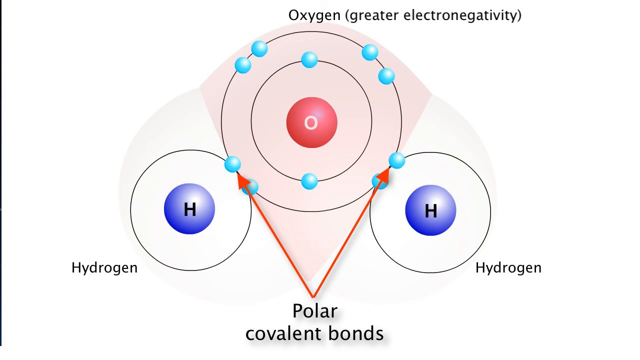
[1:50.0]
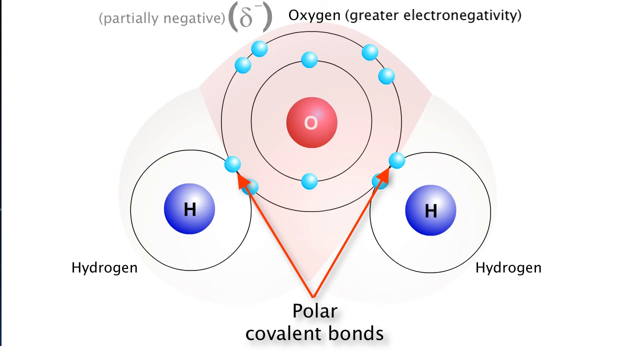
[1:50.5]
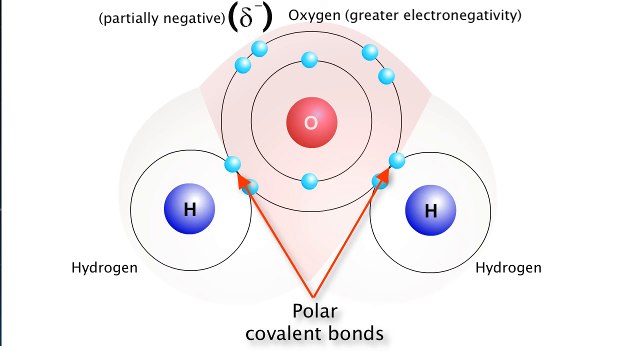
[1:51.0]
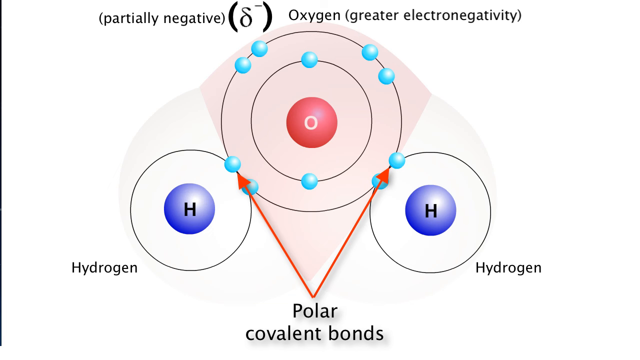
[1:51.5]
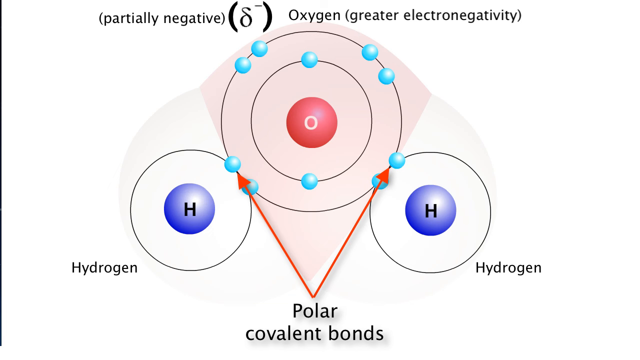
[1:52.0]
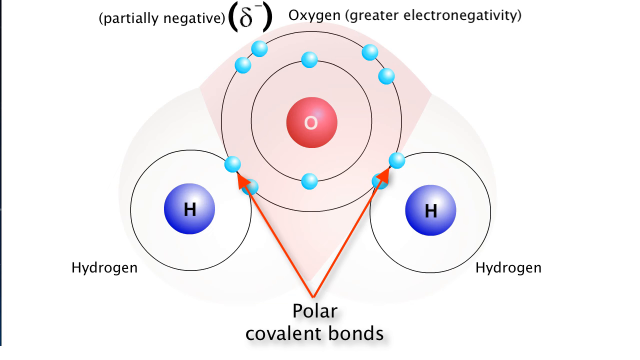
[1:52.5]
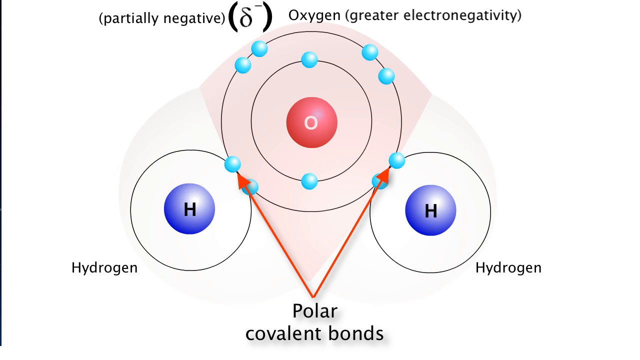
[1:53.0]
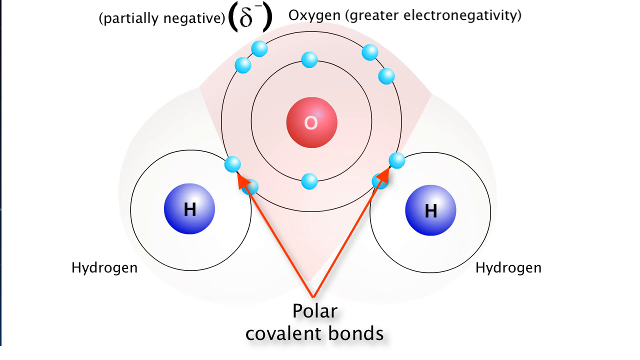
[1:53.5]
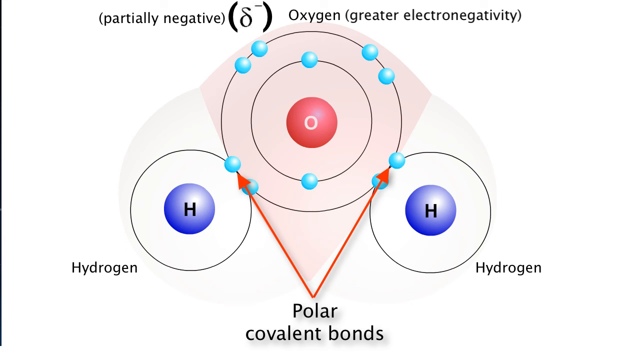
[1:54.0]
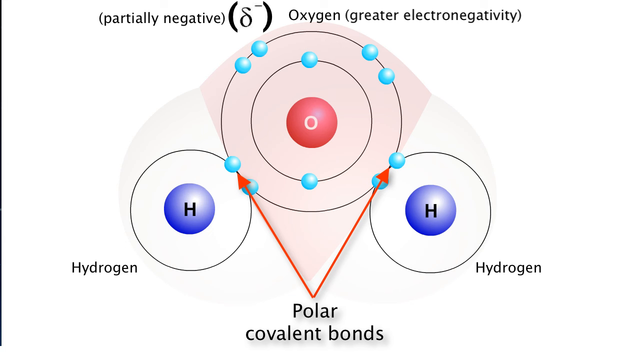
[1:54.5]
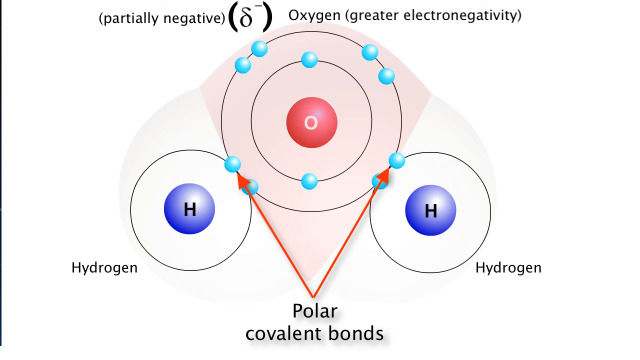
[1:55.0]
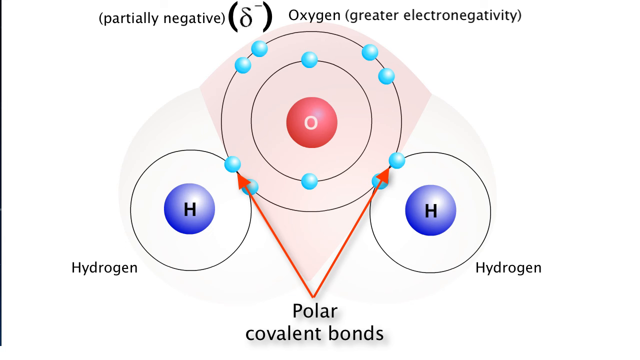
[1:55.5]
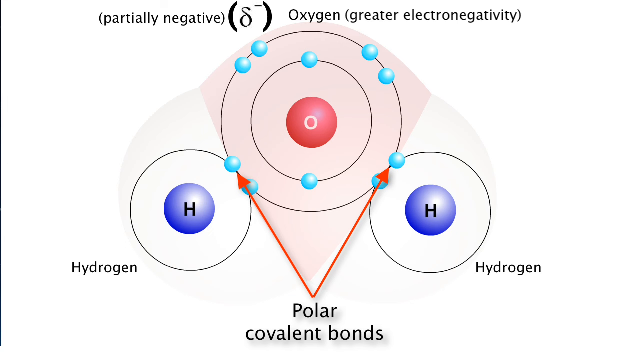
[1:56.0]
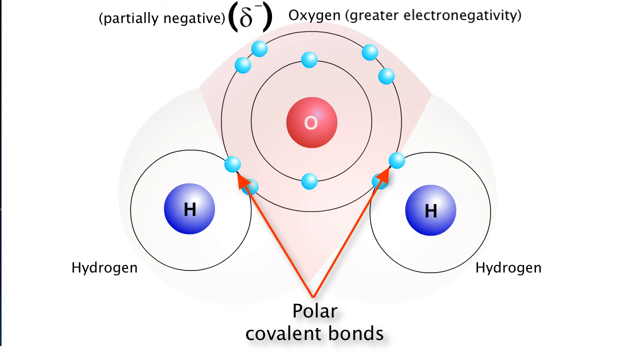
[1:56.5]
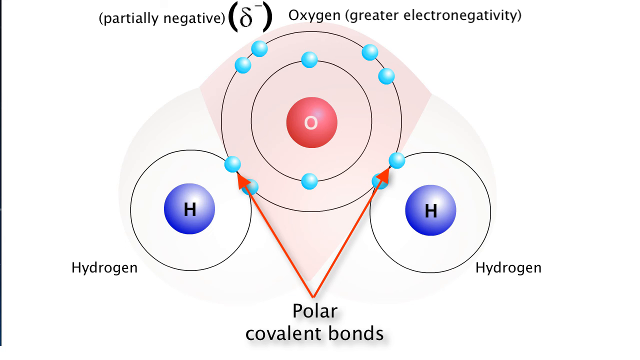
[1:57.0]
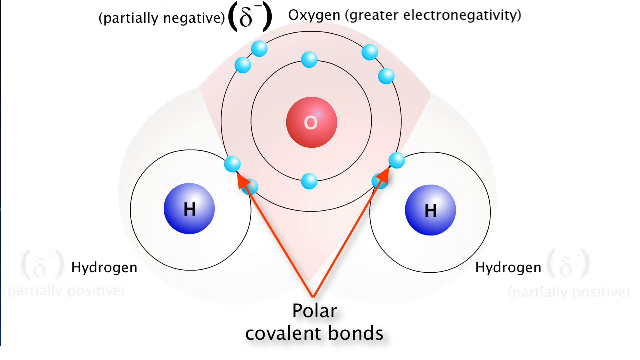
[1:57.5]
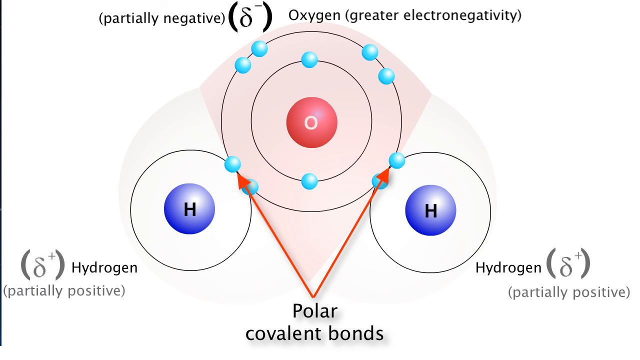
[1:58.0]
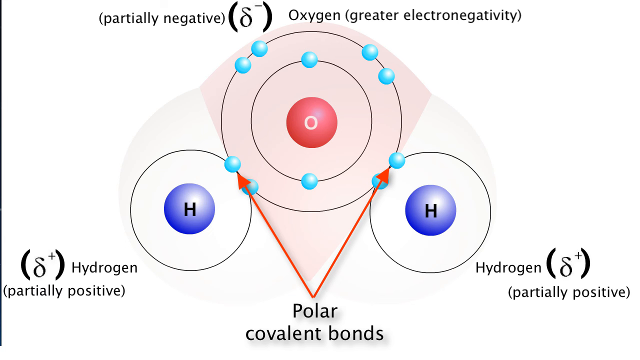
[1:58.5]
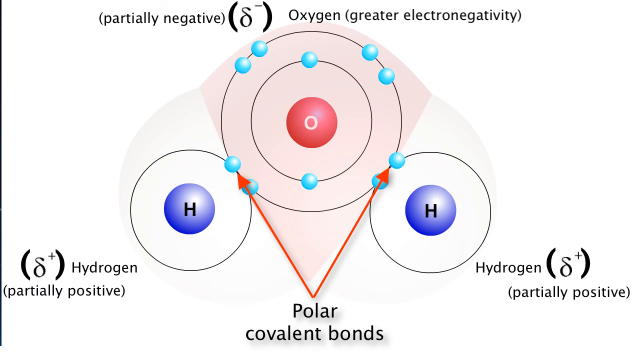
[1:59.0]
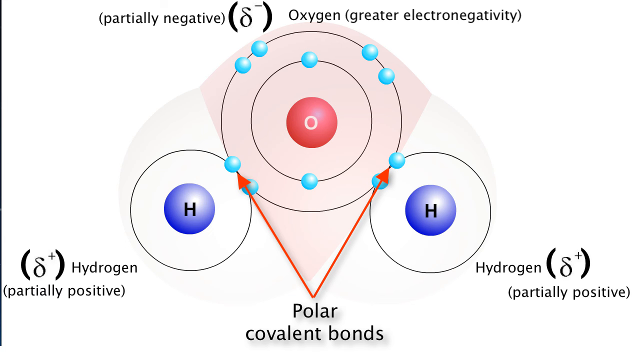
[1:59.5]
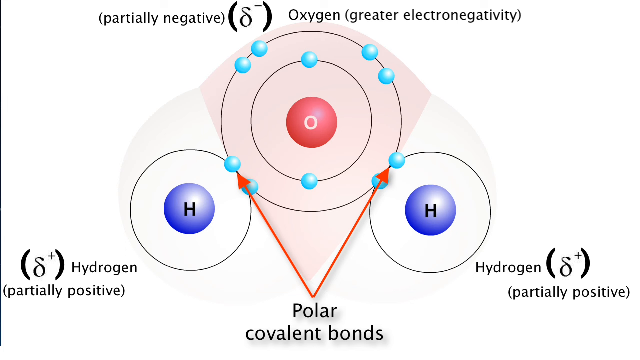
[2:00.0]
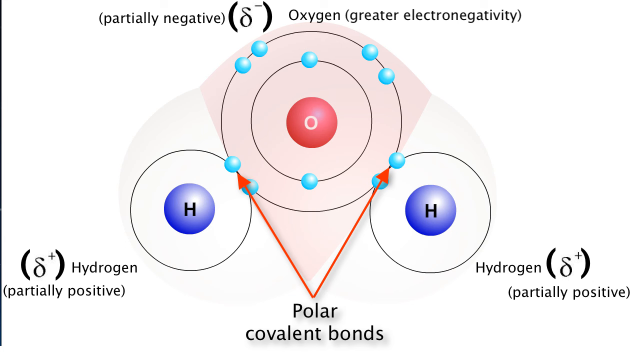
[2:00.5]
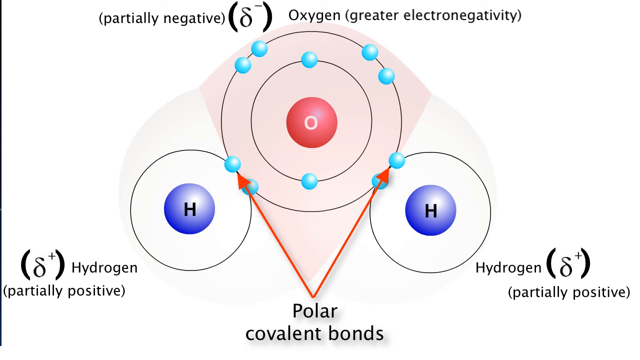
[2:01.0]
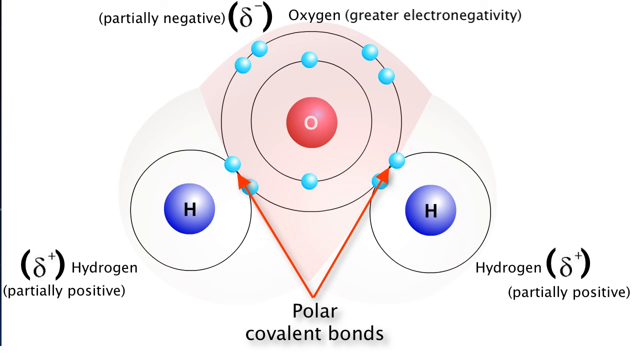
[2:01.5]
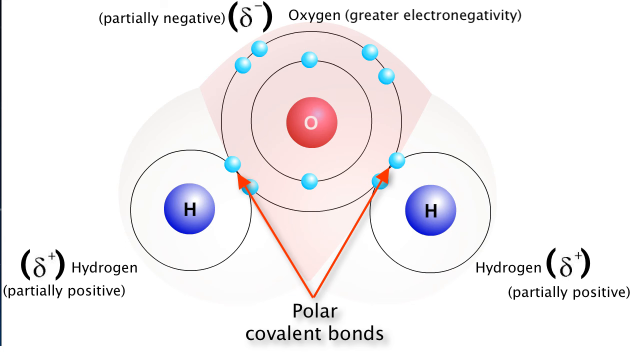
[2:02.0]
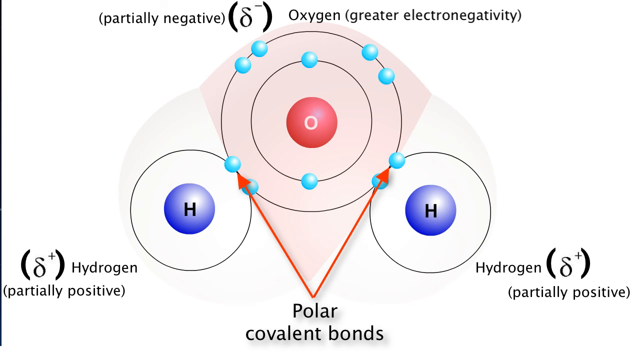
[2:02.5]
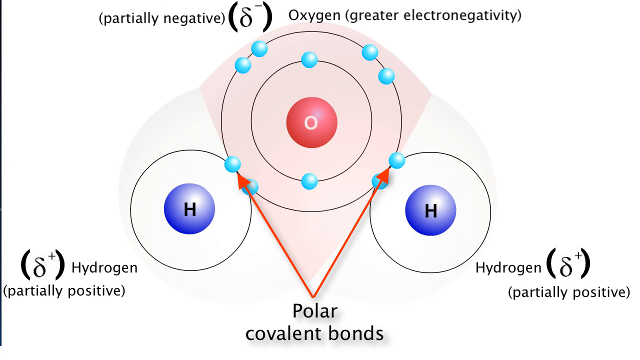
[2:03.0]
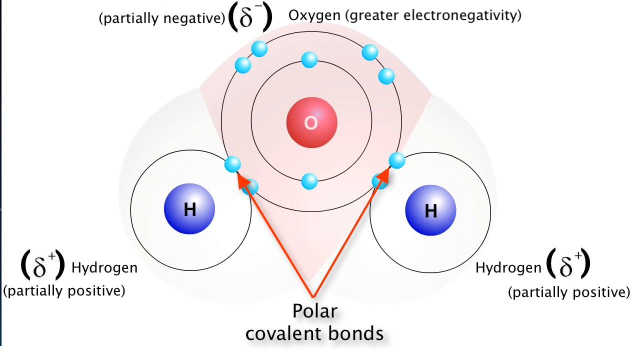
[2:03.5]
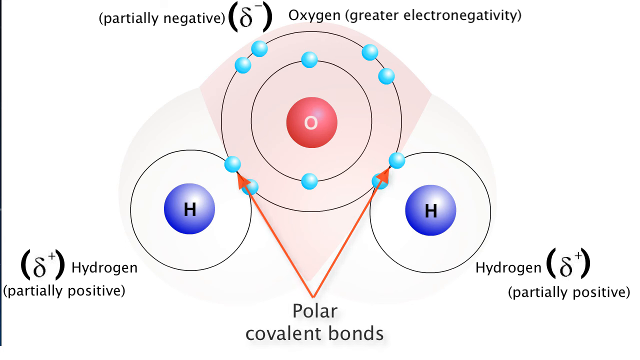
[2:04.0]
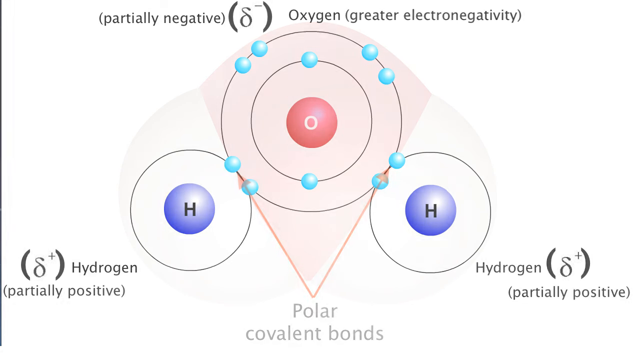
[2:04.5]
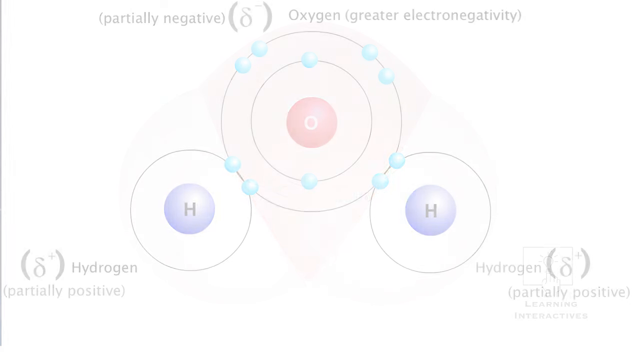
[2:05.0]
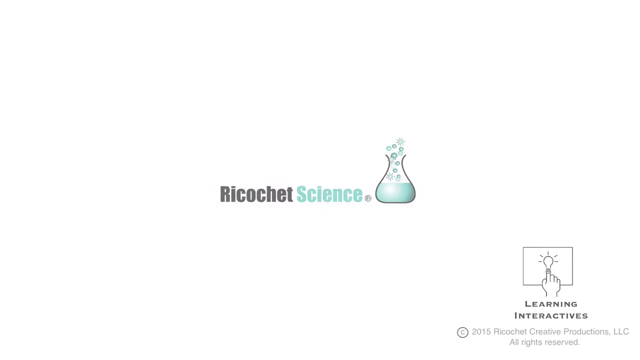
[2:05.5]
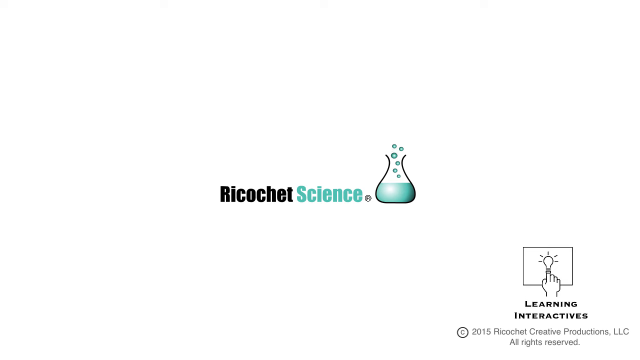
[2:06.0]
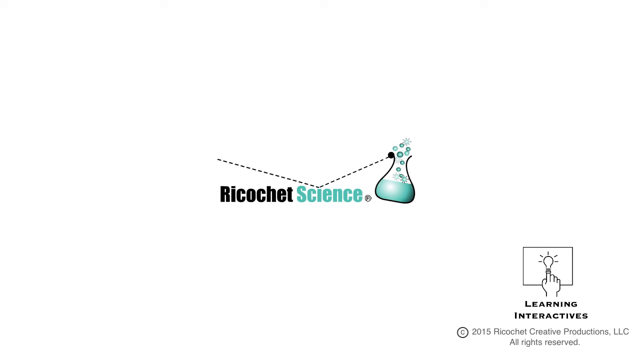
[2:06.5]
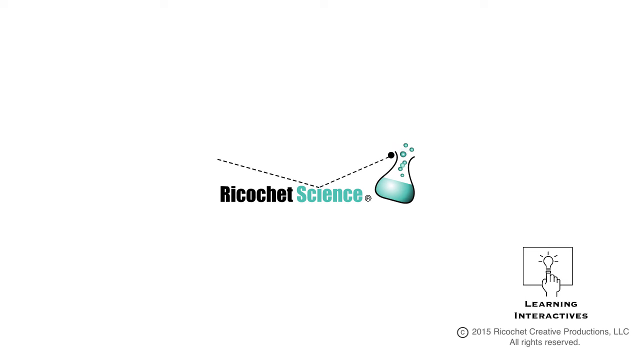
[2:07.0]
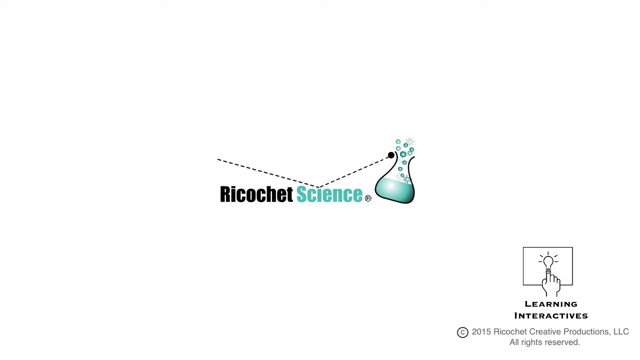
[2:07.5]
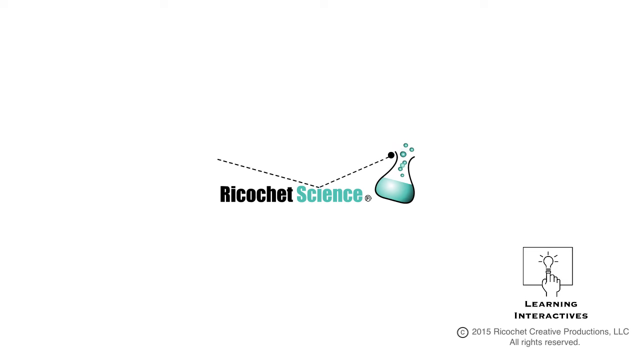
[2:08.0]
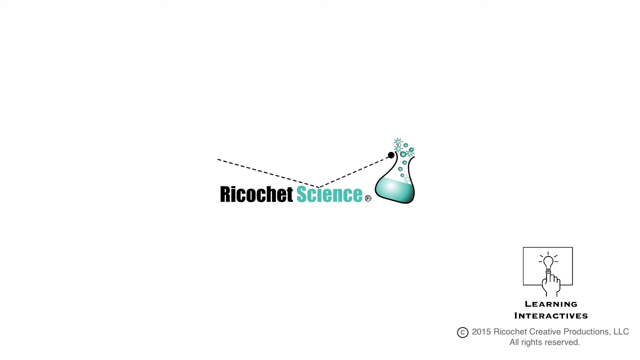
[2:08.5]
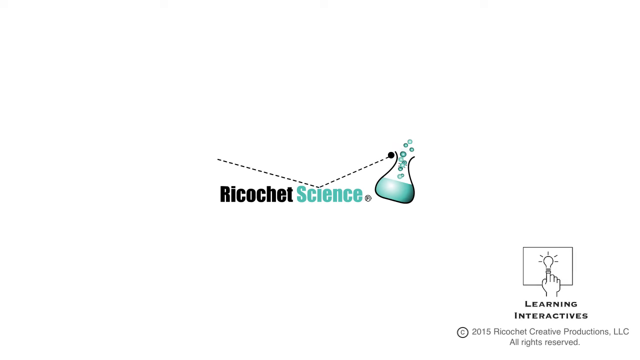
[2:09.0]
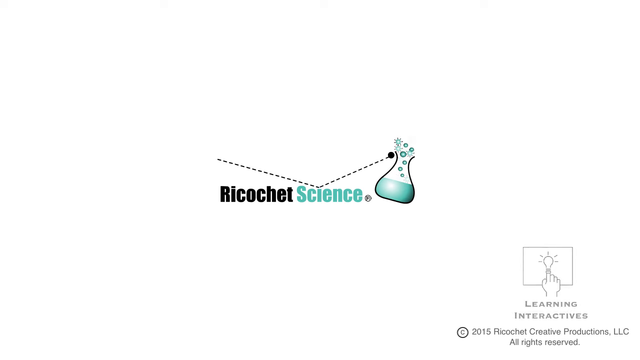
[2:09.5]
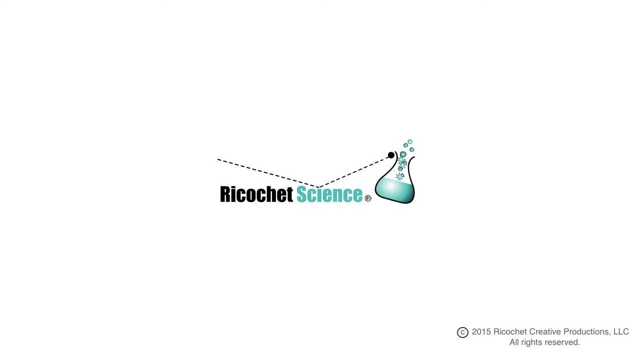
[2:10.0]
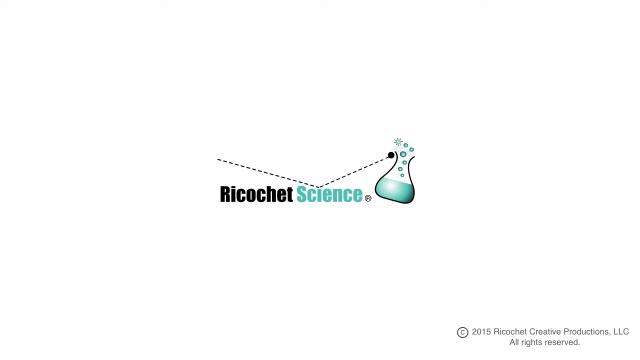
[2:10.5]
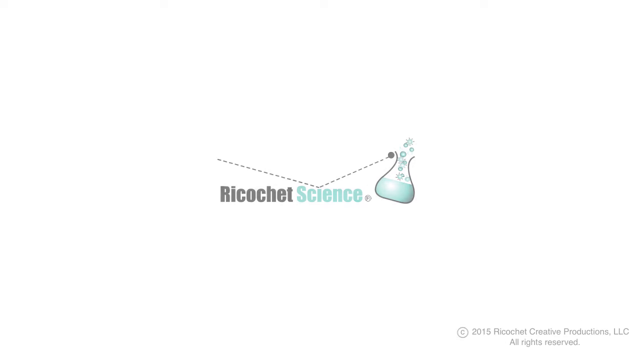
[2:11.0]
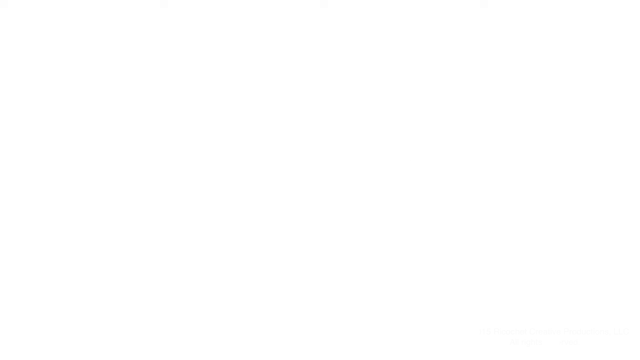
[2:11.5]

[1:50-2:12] The water molecule diagram shows "oxygen, greater electronegativity" across the top. Beneath it are concentric black rings with blue balls attached: the outer ring has four equidistant pairs of blue balls and the smaller ring around the oxygen has two, representing electron shells. The oxygen connects to the hydrogen atoms, which are labeled "hydrogen". A label at the bottom reads "polar covalent bonds", pointing at the bonds between the hydrogens and the oxygen. Then, to the left of the oxygen, "partially negative" appears with a Greek symbol with a minus superscript. A couple of seconds later each hydrogen gets a caption reading "partially positive" with the same Greek symbol, possibly a lowercase theta, with a superscript plus. That fades out and the Ricochet Science logo appears in the middle of the screen rather than at the bottom this time, with "ricochet" in black, "science" in light blue, and a stylized beaker filled with blue liquid and blue bubbles coming up. A ball comes from the left side and moves downward trailing a dotted line, collides with the I in "science", bounces back up, hits the beaker and knocks it askew. In the bottom left is a black box with a black light bulb icon and a hand touching the bulb with a single finger, captioned "learning interactives, copyright 2015, ricochet creative production LLC"; the rest cannot be read because of the video play controls.